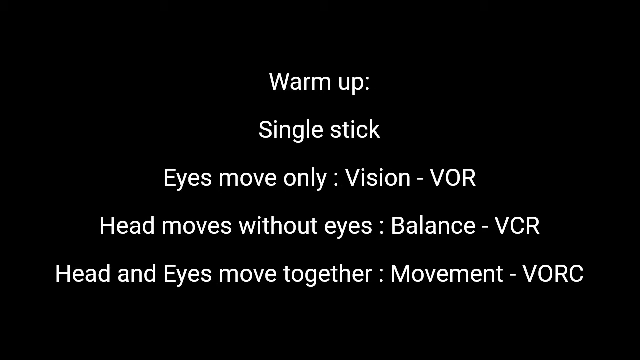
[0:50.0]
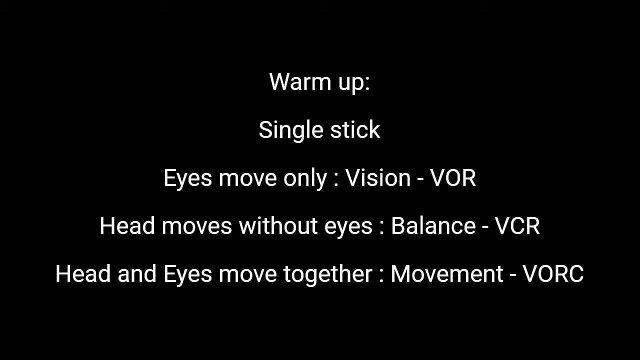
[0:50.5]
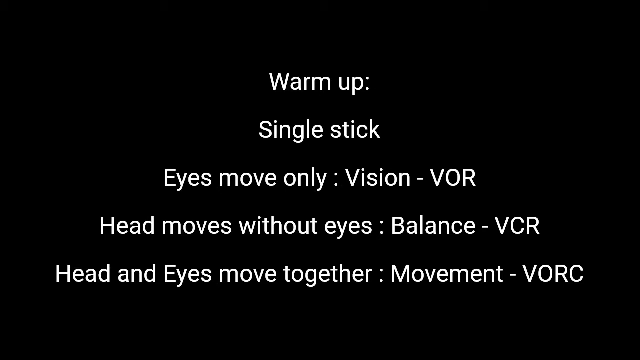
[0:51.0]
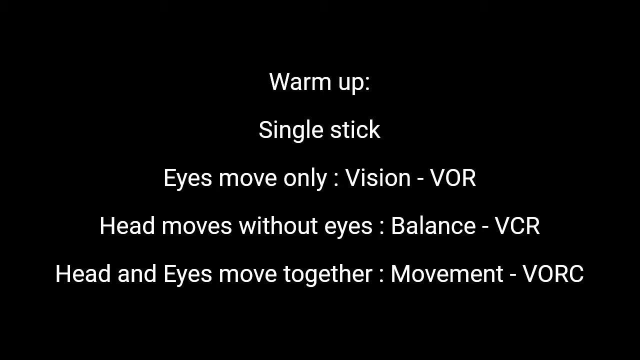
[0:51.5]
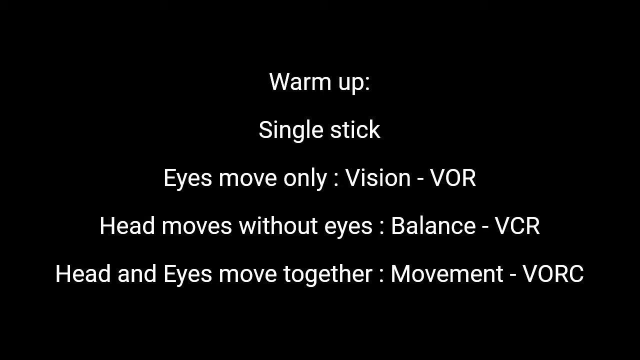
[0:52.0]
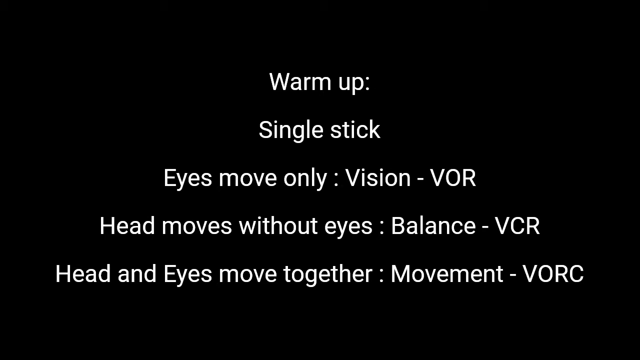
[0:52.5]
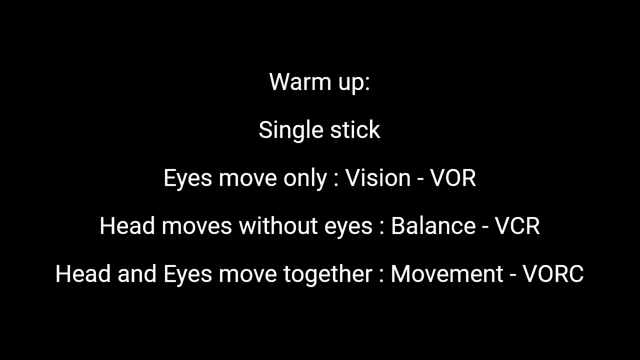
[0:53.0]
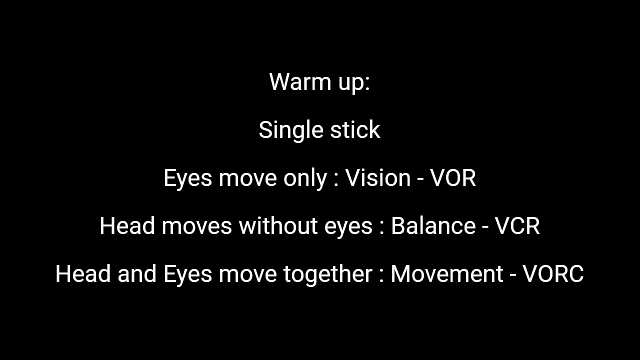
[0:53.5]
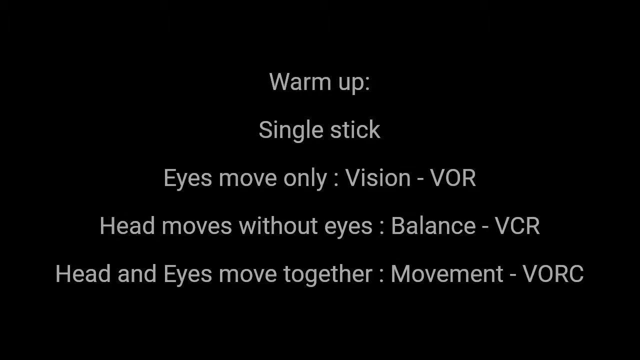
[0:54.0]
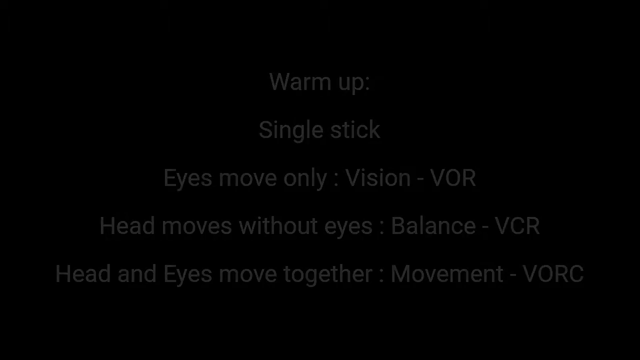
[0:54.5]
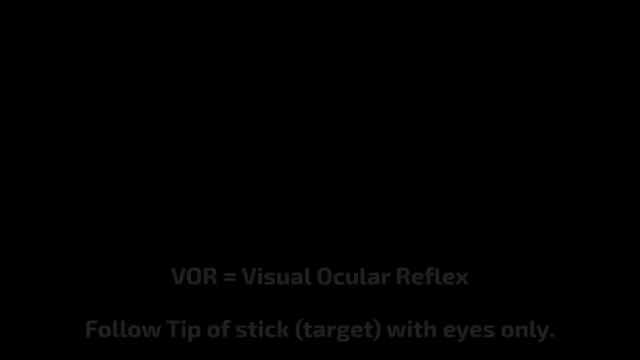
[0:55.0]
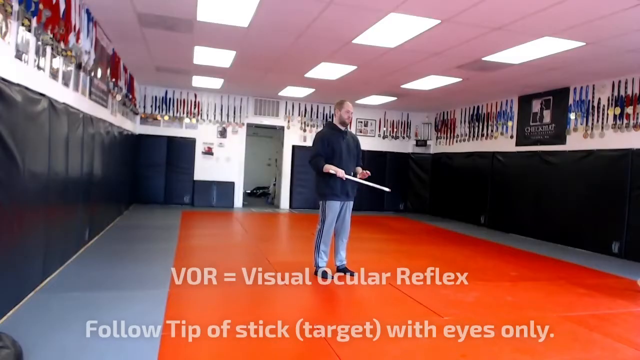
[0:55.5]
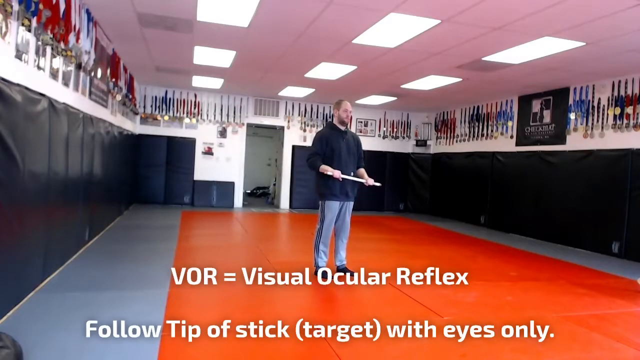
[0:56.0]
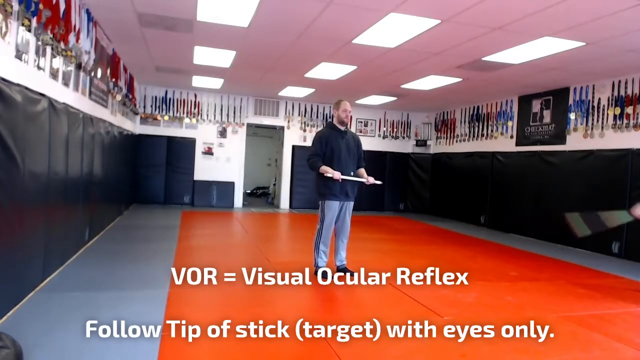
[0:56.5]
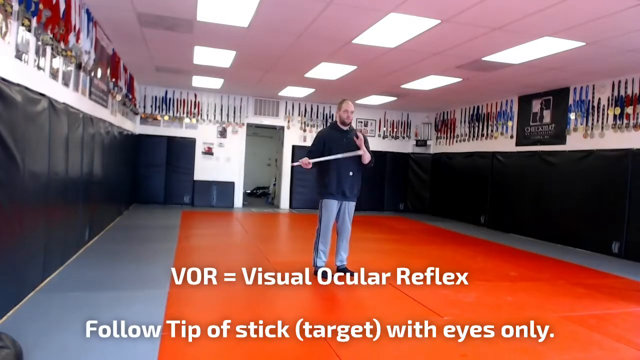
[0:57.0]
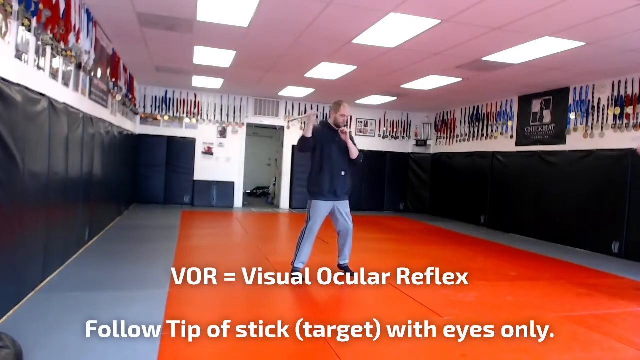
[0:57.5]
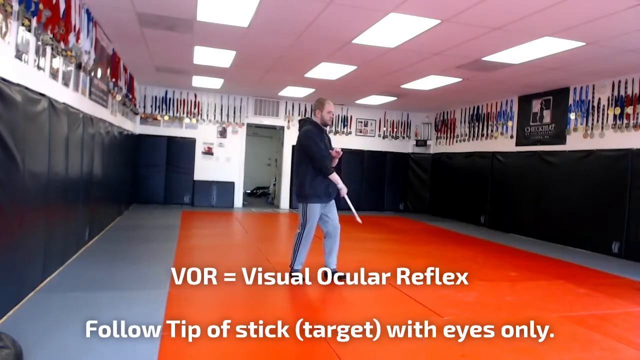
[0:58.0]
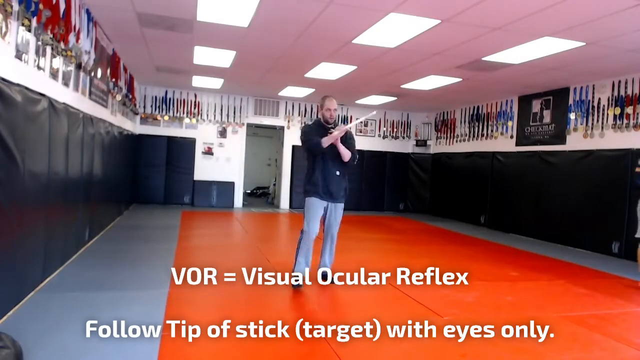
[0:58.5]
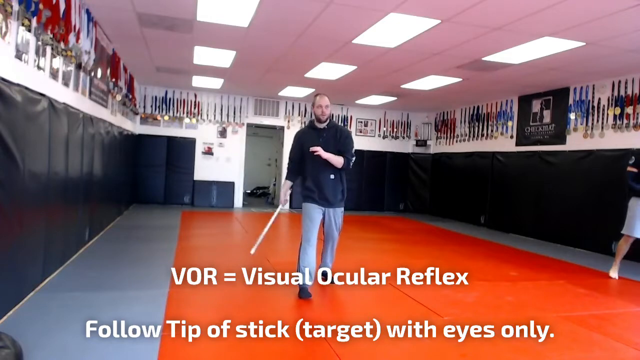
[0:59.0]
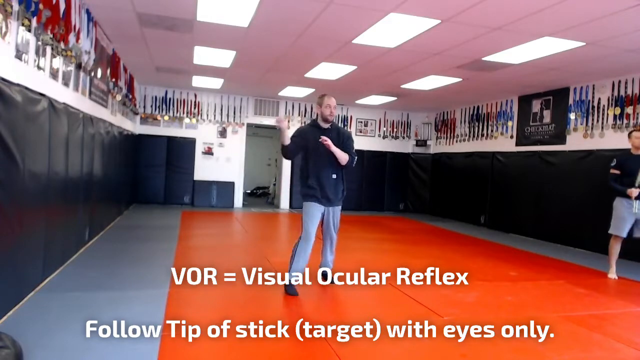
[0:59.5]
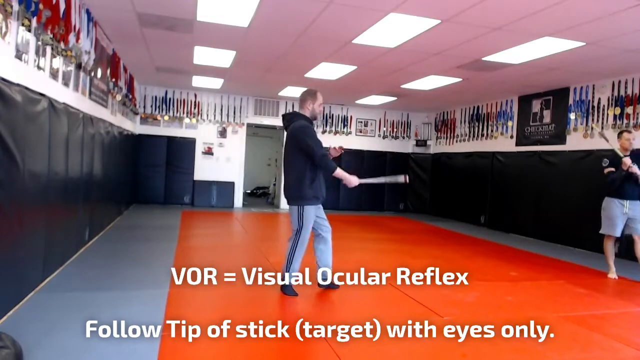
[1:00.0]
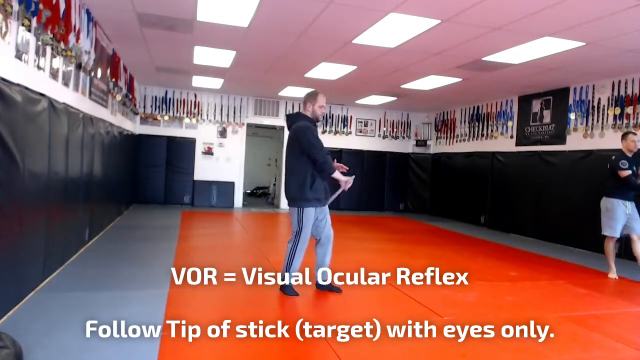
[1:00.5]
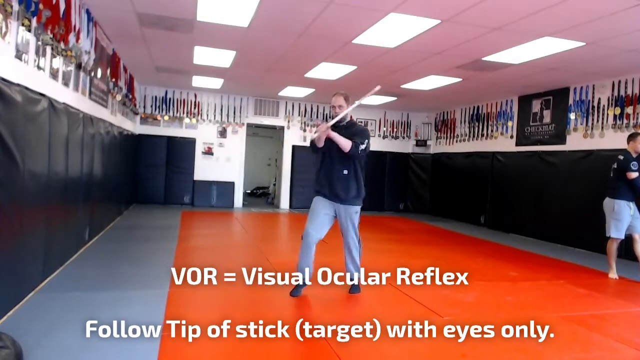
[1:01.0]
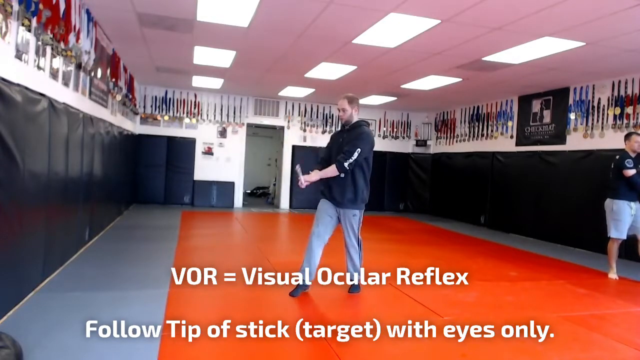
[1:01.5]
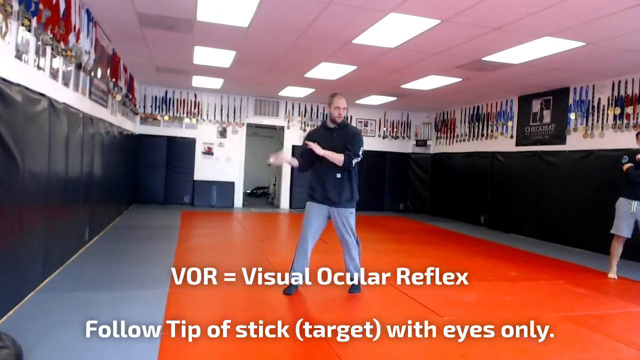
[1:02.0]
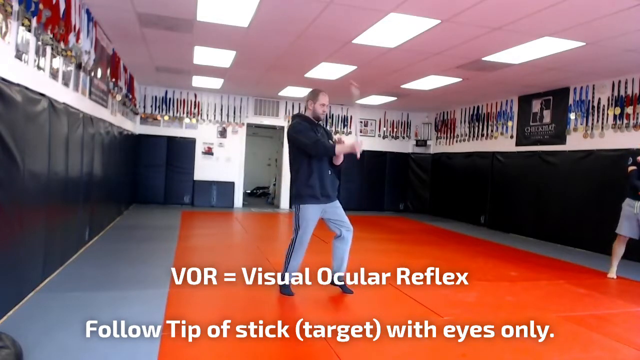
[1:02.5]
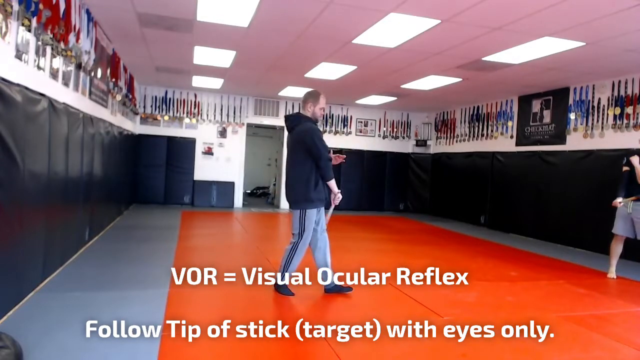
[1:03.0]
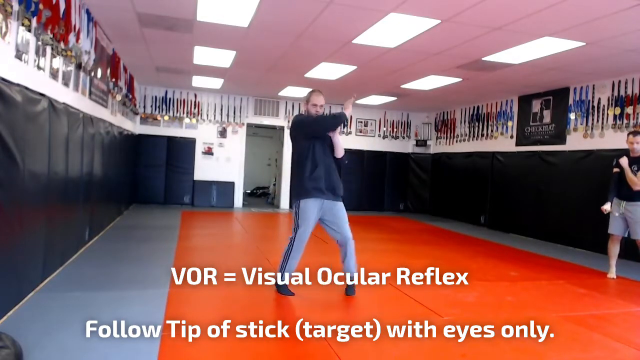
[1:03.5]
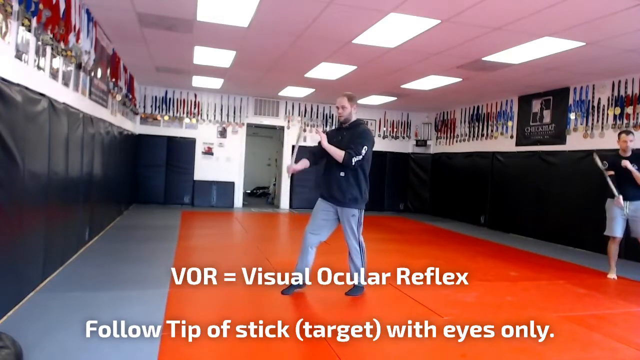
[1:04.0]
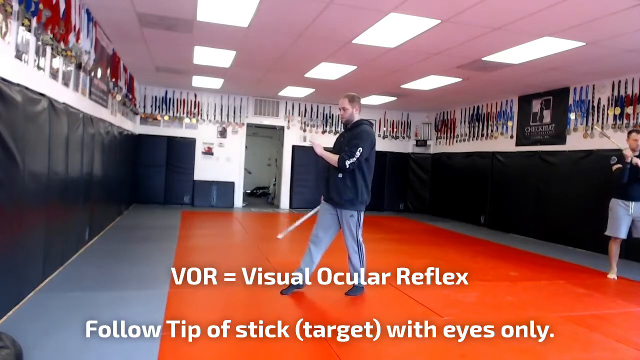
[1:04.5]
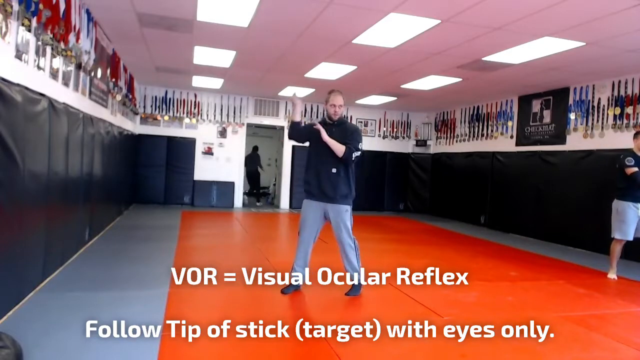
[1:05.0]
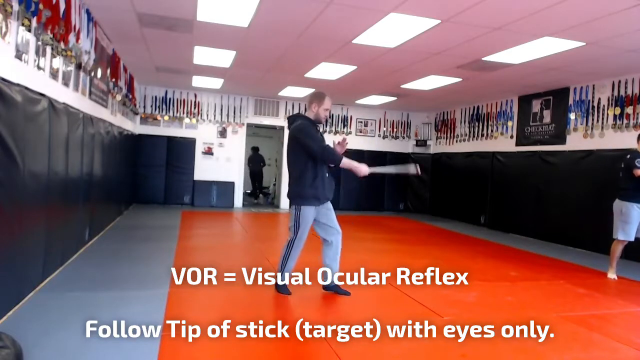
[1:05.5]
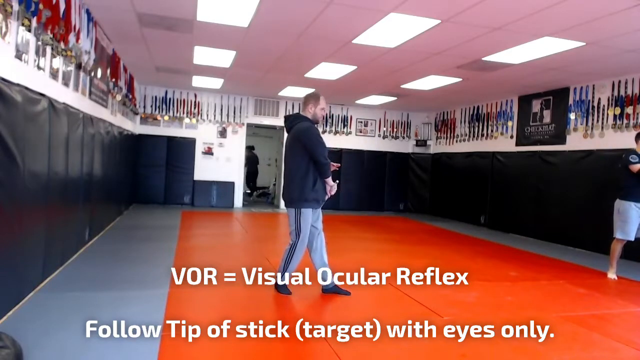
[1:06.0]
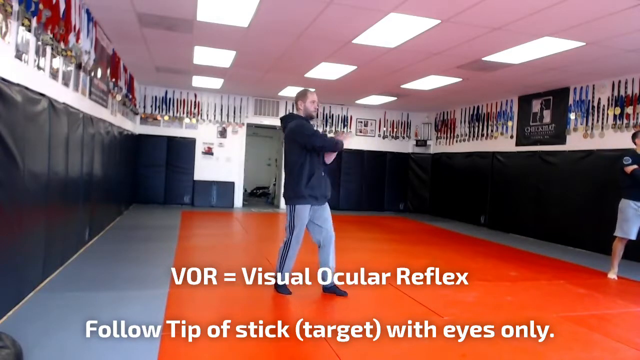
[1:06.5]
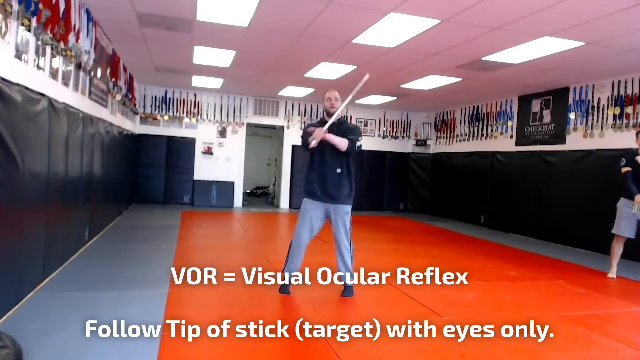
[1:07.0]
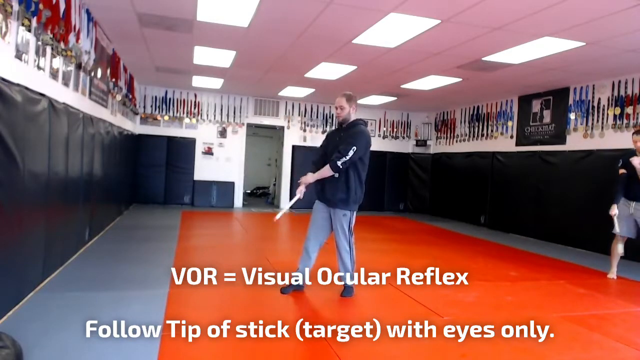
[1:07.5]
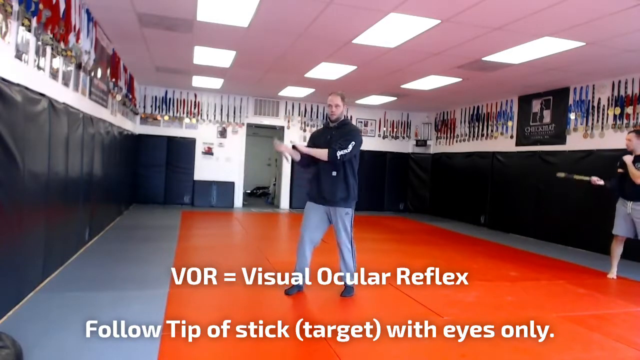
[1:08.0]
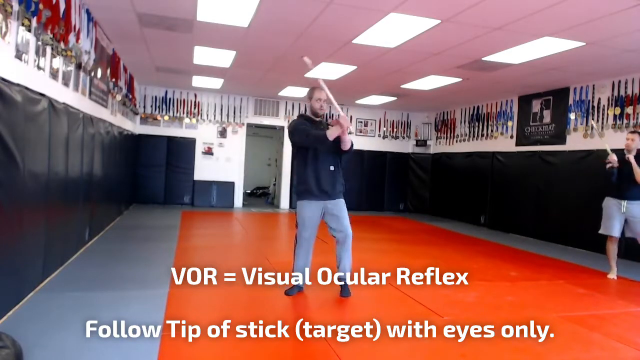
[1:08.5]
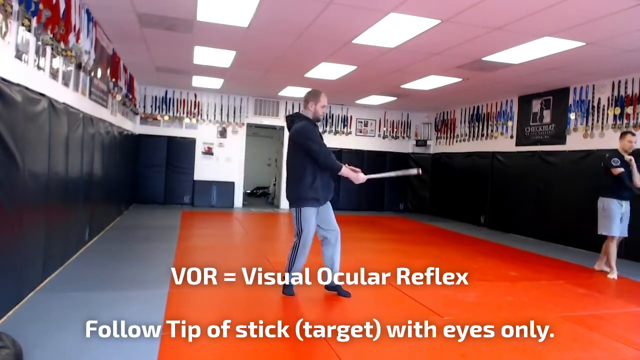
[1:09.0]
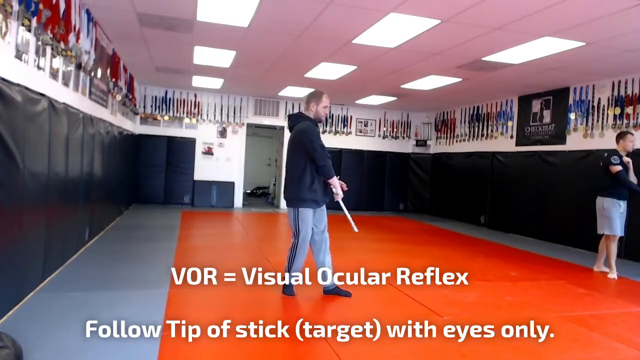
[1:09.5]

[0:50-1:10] White text on a black field reads "warm up: single stick", "eyes move only: vision - VOR", "head moves without eyes: balance - VCR" and "head and eyes move together: movement - VORC," with the V acronyms in all caps. It fades out to the inside of a gym or dojo, with banners or something on the walls that are hard to make out, maybe medals. A Caucasian man is in the middle of the floor. He is balding, with what looks like light brown or maybe dark red hair, a beard and a mustache, and wears a black shirt, light blue jeans and black shoes, holding what looks like a practice stick. The floor has a rectangular pattern: a large red rectangle in the middle ringed by a gray line. There is black padding on the walls and a door in the middle of the wall behind him; the space looks like it might be an arena set up to indicate boundaries. A white caption reads "VOR = visual ocular reflex" with the next line "follow tip of stick, target with eyes only." He begins to swing the stick. Another man steps into the frame from the right side: a Caucasian with short dark hair, apparently clean shaven, in a short-sleeved black shirt and light blue shorts, and apparently barefoot. Another person, wearing a black hoodie, briefly appears in the doorway. Both men swing their sticks in a cross pattern or maybe a figure-eight pattern, though not for very long.